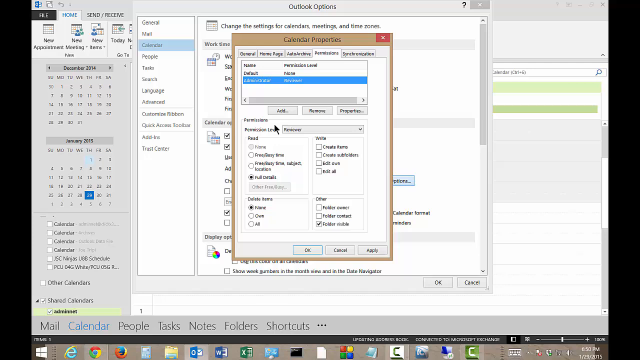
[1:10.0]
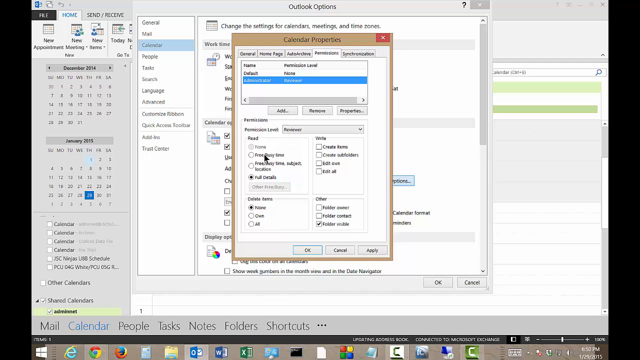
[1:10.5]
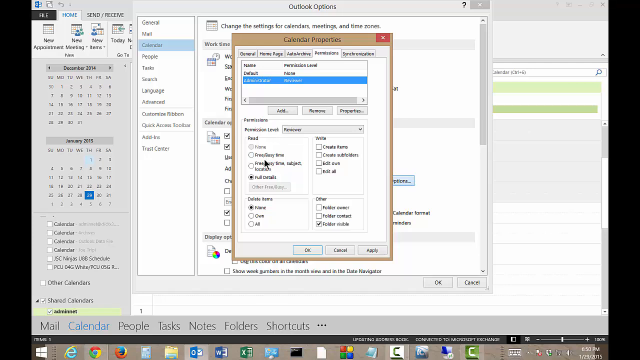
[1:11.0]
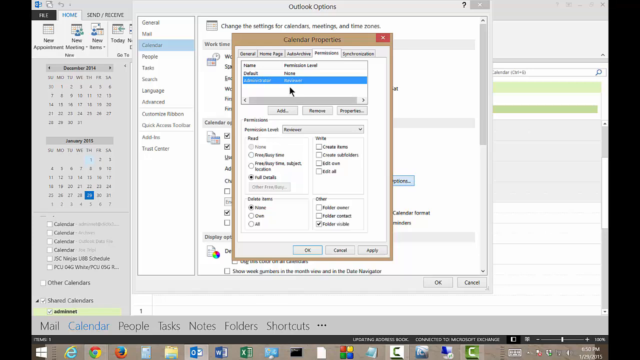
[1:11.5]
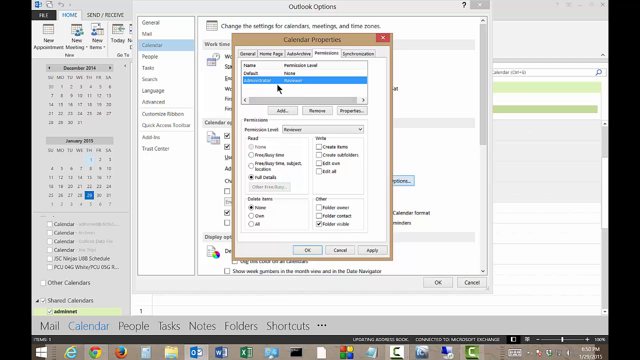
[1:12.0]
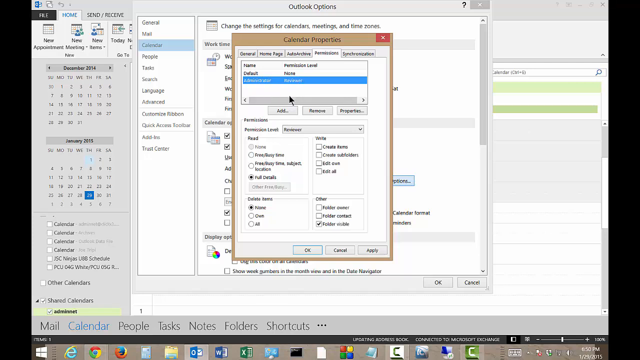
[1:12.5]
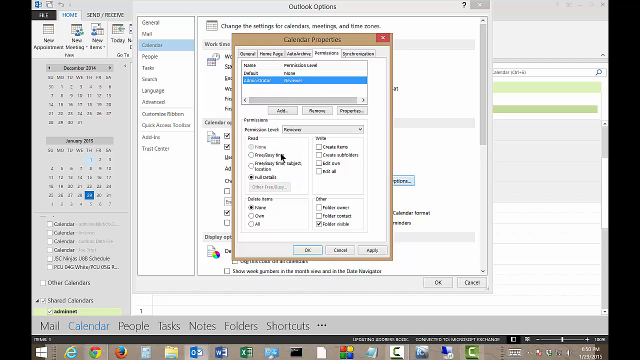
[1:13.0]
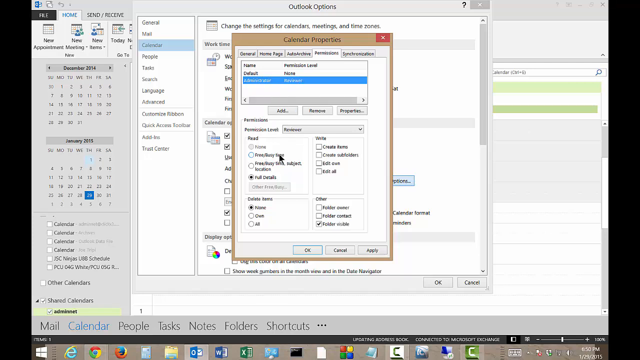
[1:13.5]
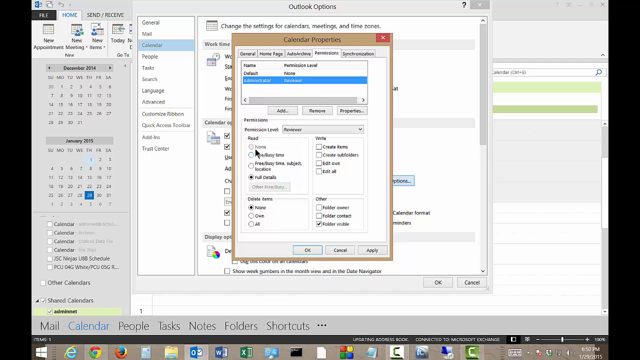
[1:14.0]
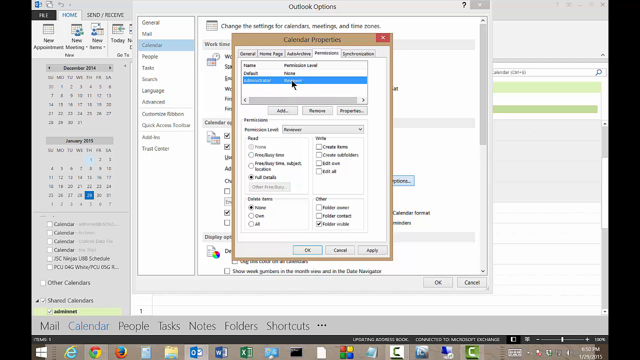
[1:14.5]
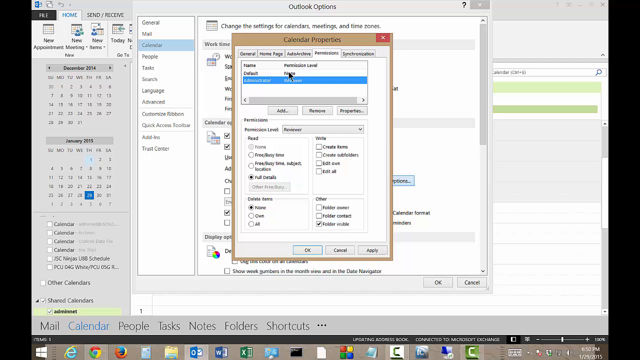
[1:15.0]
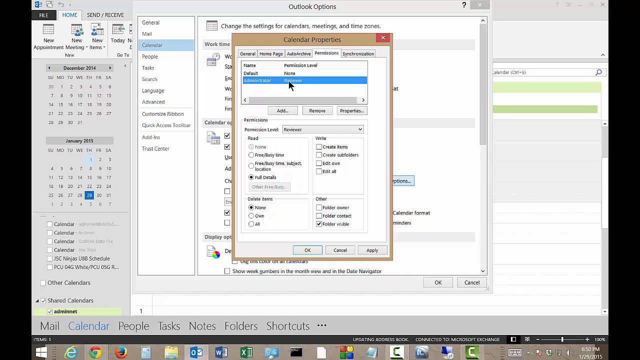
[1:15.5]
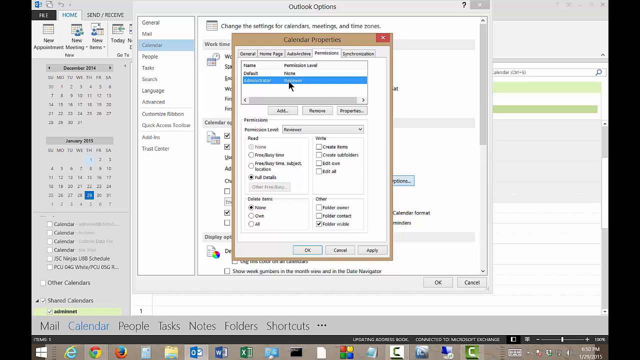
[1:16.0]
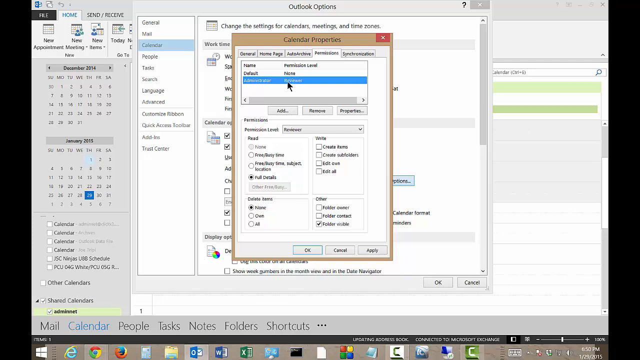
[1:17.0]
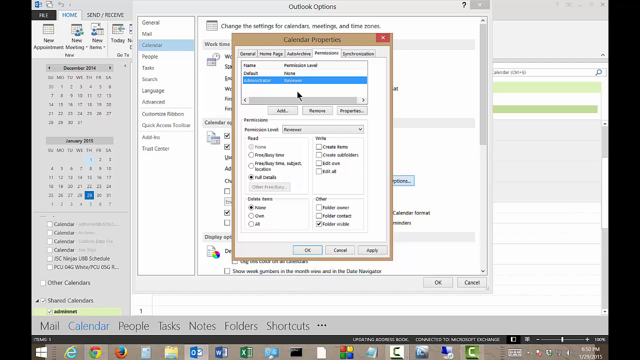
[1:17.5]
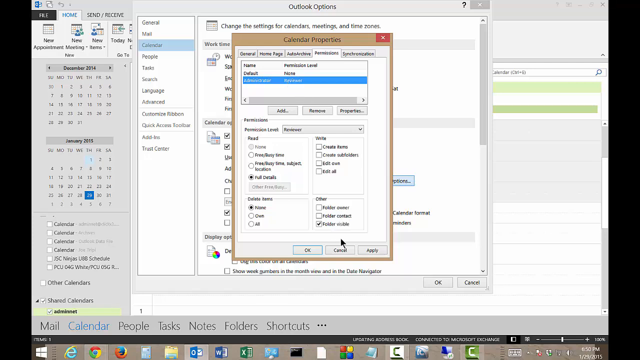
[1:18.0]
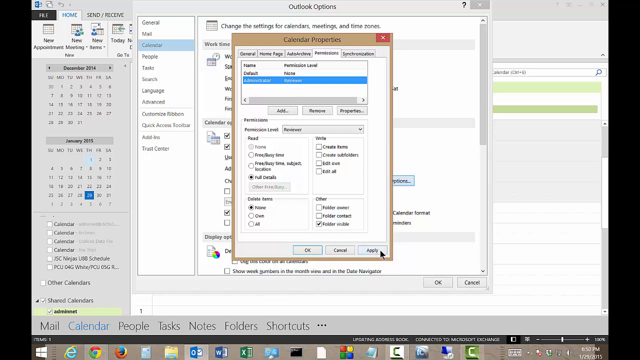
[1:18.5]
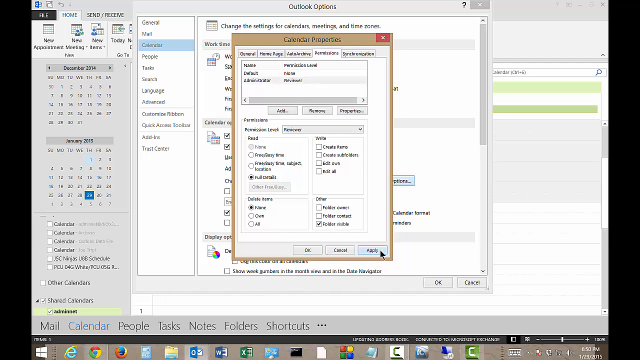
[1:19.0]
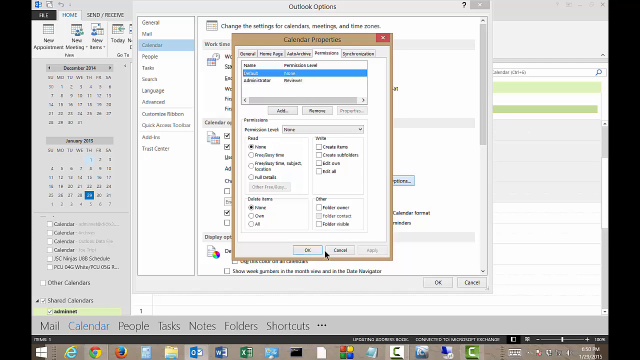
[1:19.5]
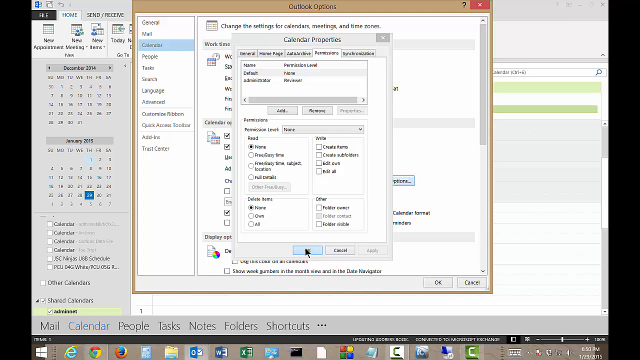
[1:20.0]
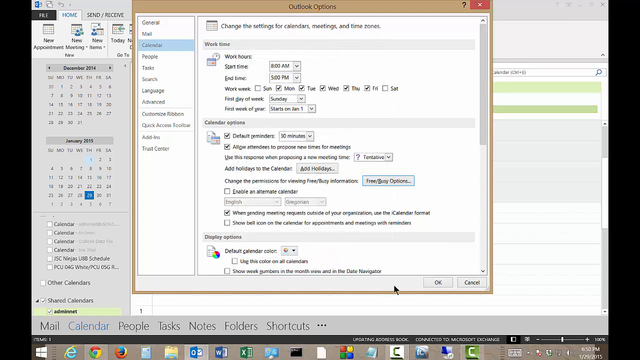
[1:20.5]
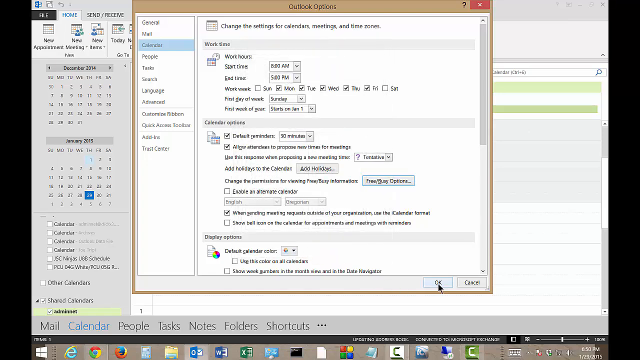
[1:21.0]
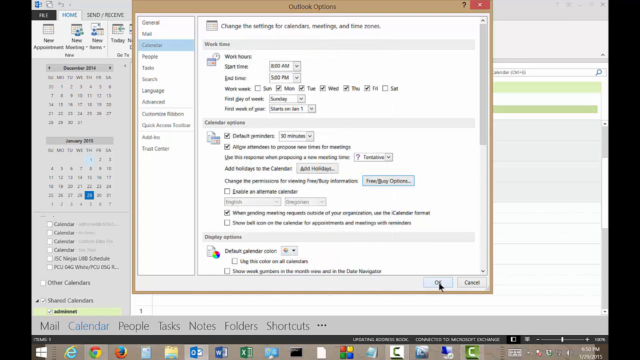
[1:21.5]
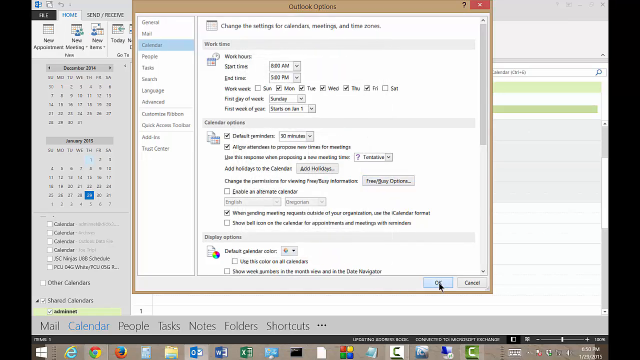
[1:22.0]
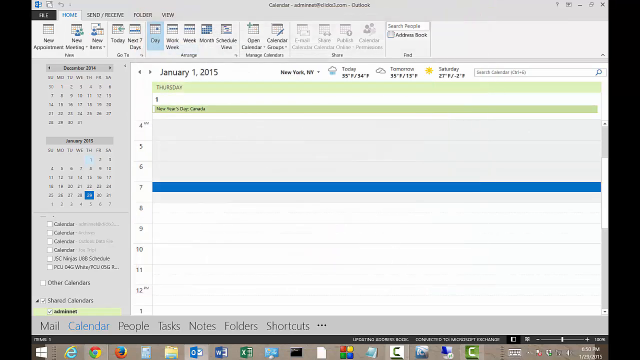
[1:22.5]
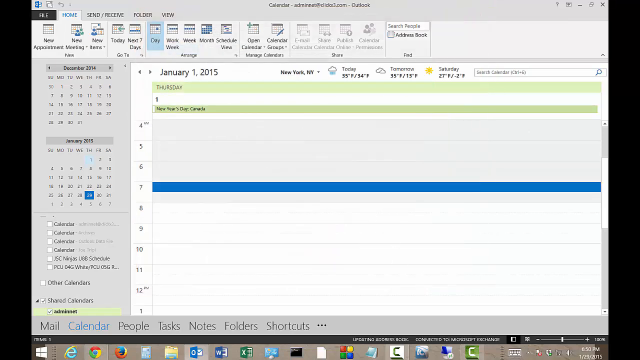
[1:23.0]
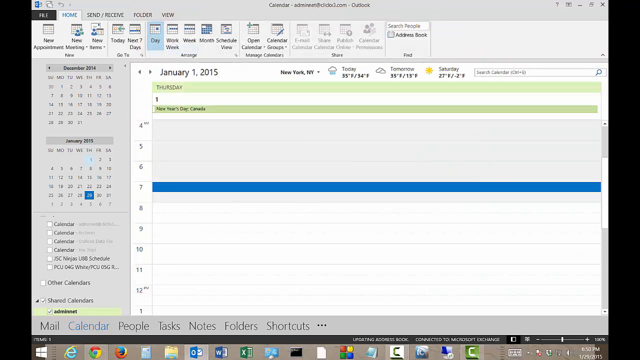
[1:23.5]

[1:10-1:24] The user continues navigating the calendar properties in the Microsoft Outlook calendar. The cursor appears to wiggle at one point. The user makes some selections and clicks apply at the bottom, then presses OK on the window still open underneath, returning to the main Microsoft Outlook calendar panel, where the date is still set to January 1st 2015.